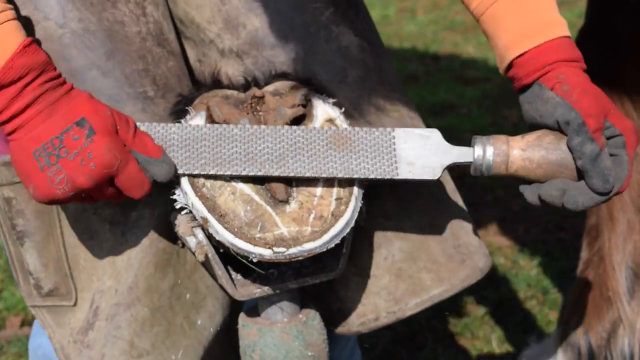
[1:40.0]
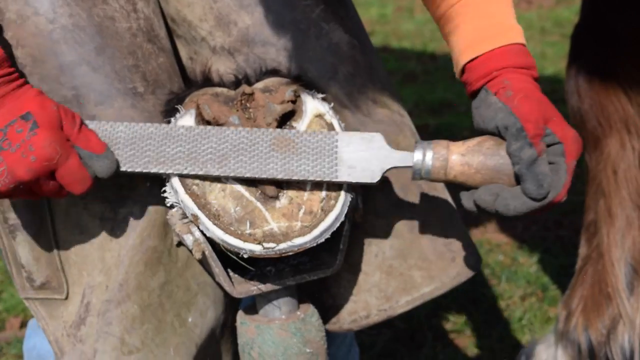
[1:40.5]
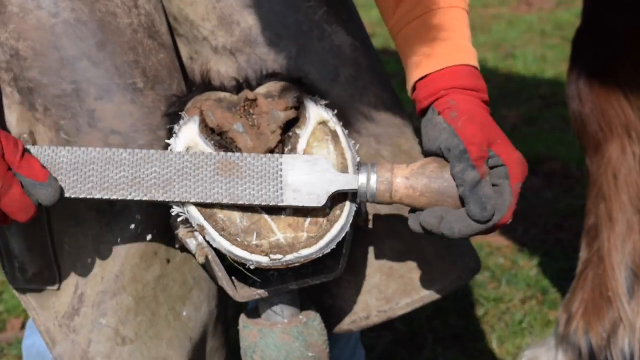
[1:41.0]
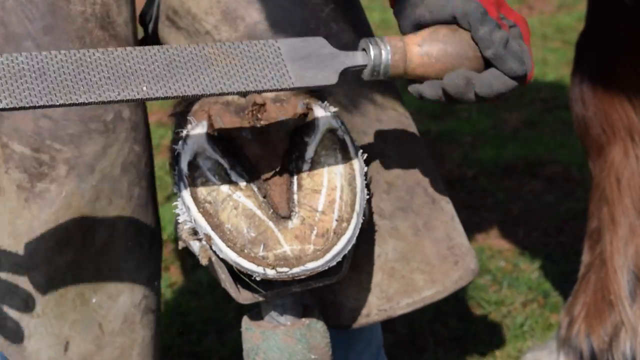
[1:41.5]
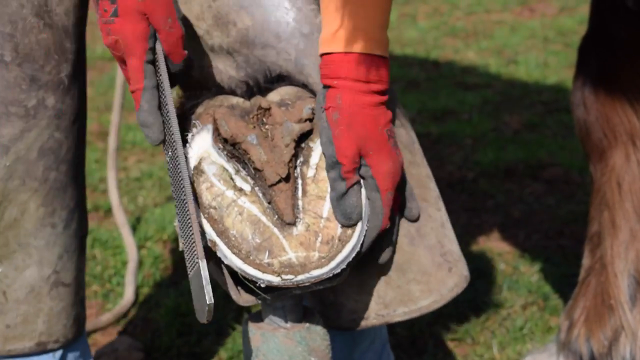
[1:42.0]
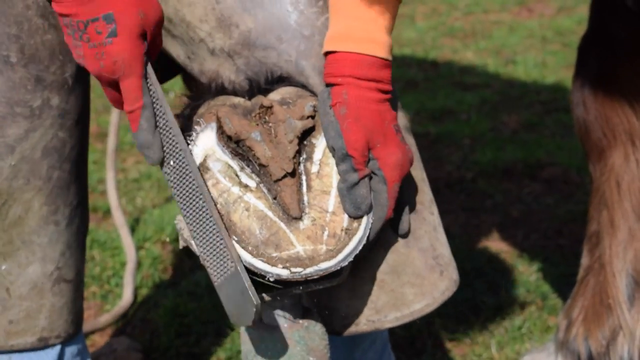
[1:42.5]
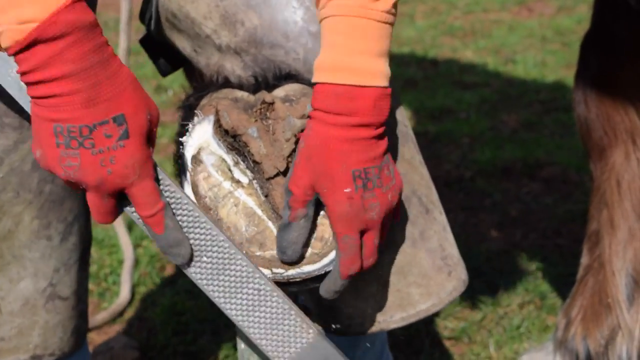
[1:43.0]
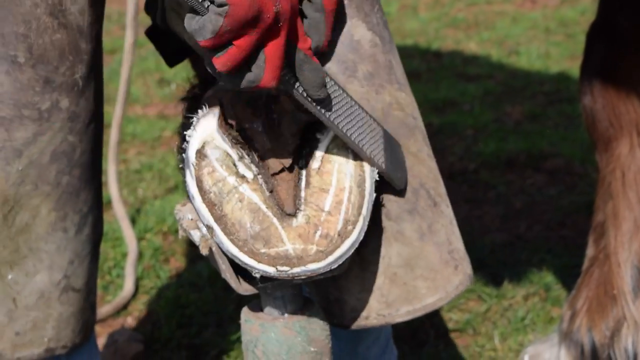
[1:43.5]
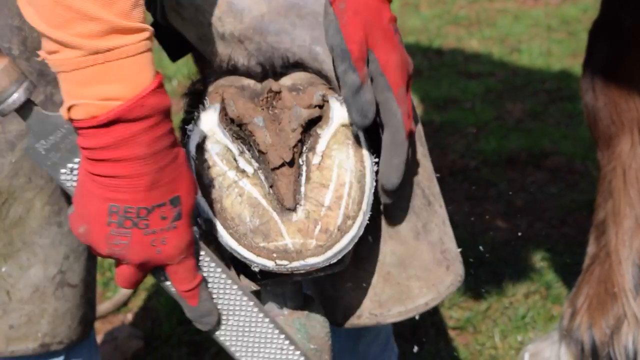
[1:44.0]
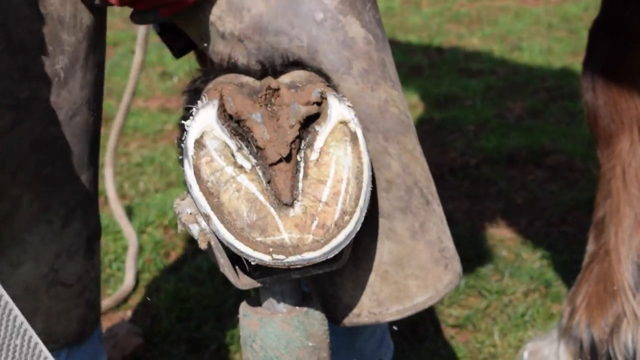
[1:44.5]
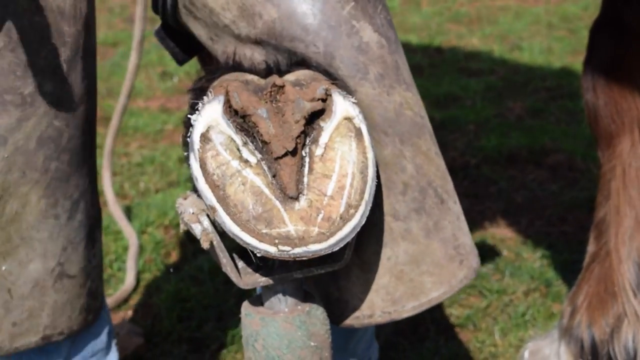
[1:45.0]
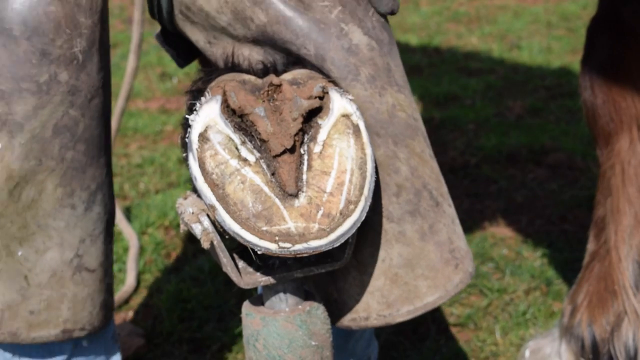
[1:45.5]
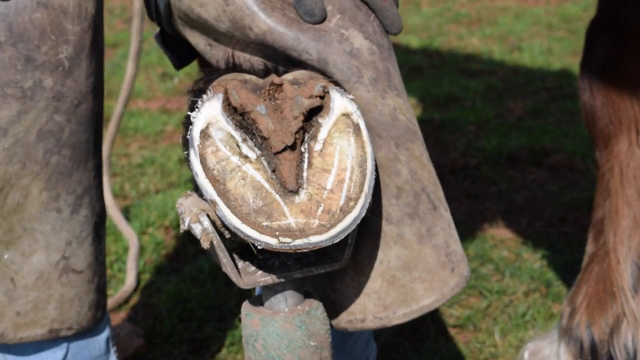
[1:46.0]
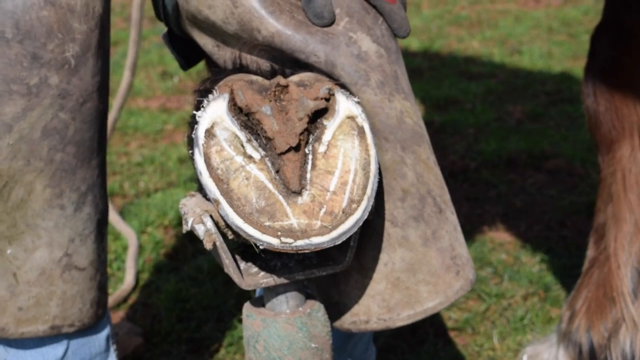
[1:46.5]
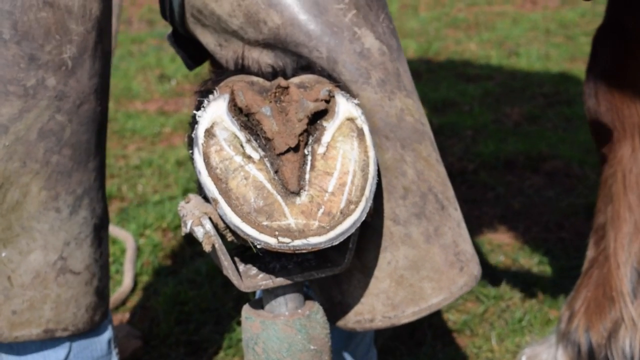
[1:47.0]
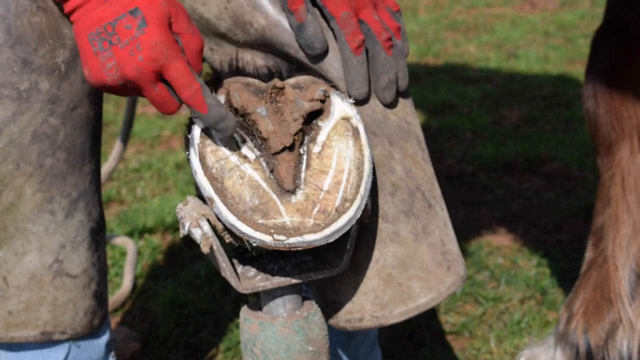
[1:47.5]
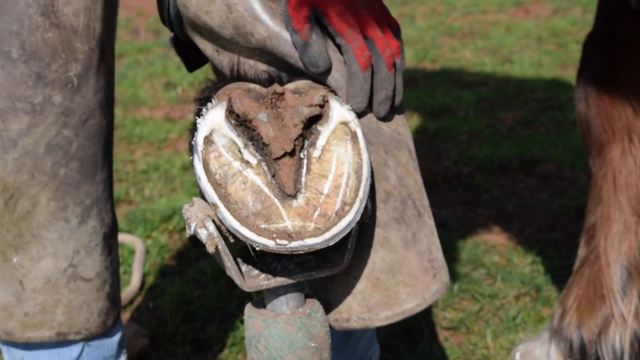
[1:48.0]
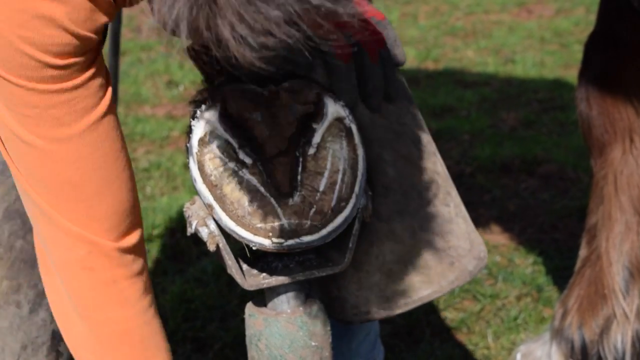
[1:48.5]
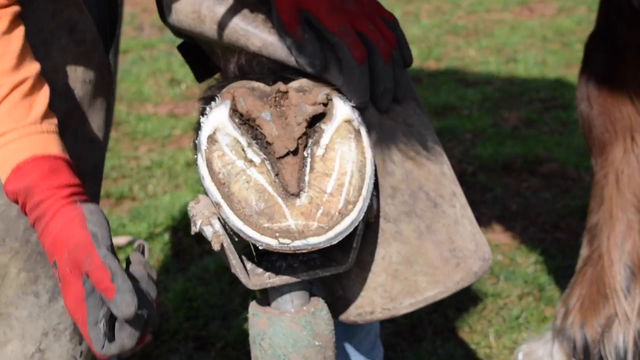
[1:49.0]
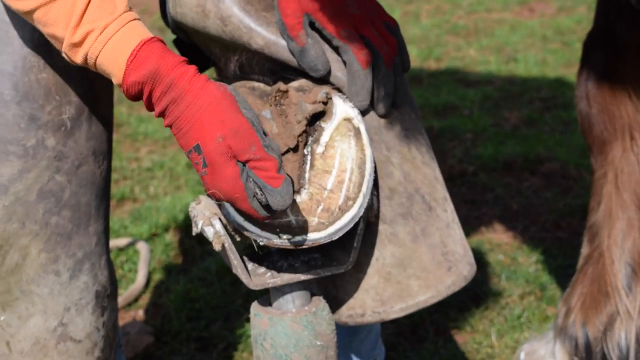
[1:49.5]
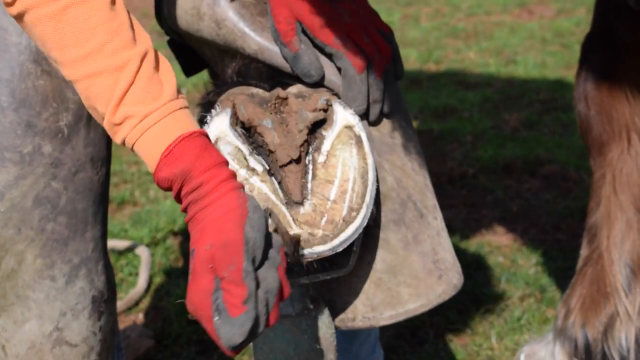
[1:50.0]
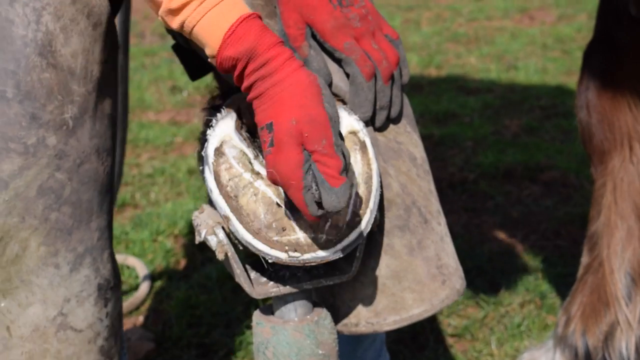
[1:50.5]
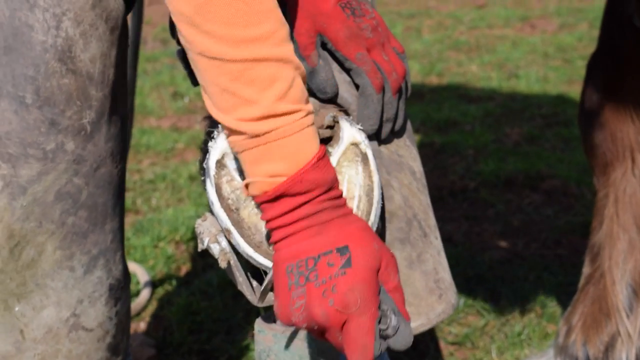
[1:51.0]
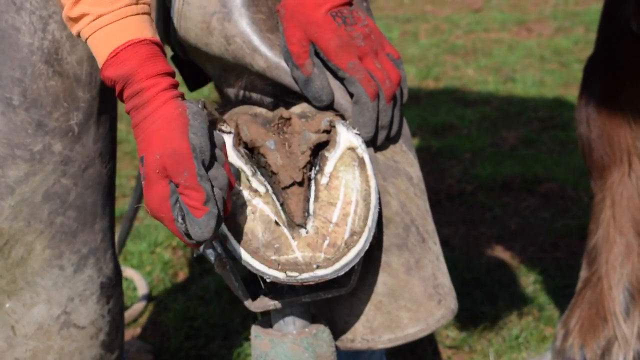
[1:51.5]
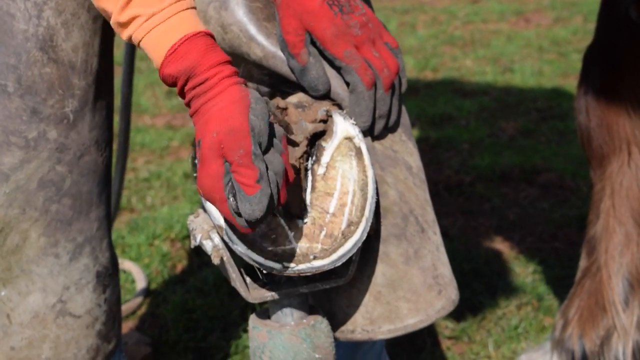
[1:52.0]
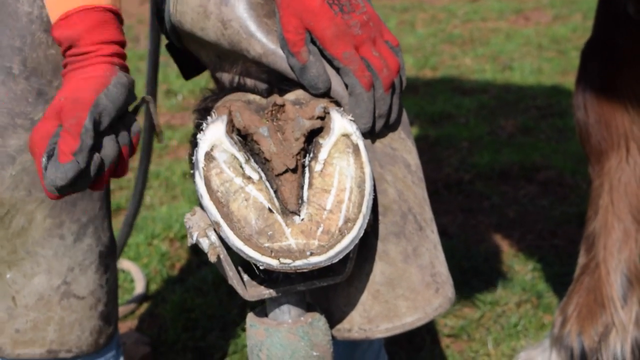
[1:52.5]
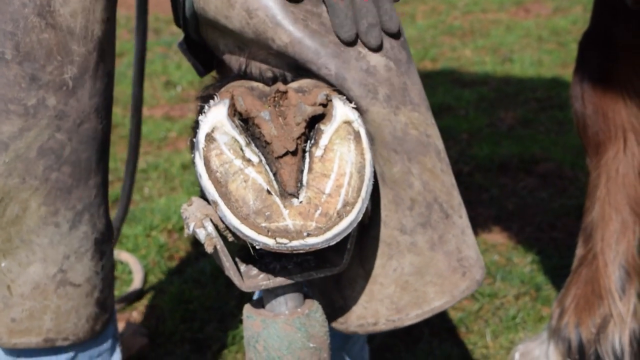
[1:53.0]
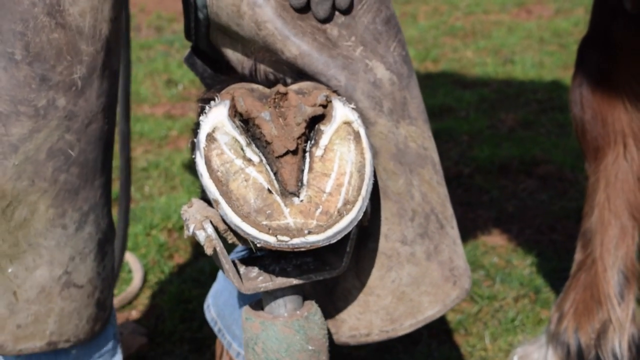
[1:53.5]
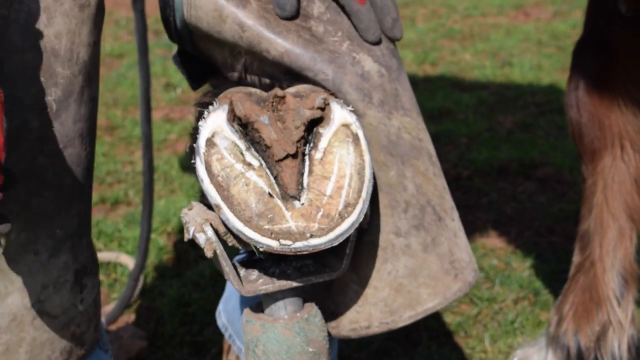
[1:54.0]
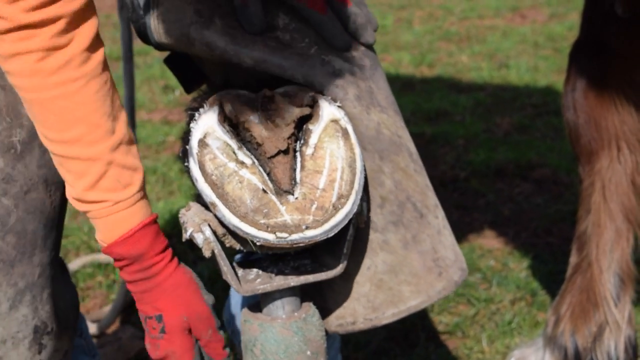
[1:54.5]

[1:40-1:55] Using the same large file tool, she files the top a little and continues filing around the edges. She points out a spot that she apparently thinks she missed. She grabs the other tool she used earlier, which cannot really be identified because her whole hand covers it, and quickly goes around the triangle area of the hoof, shaving a few little things off. She keeps the hoof in place with her leg, but toward the end she appears to slowly ease the foot back, maybe to get it out of the middle holder. The horse still stands still in the background as she explains what she is doing. Her hair blows lightly in the breeze, and the sun is shining brightly, casting shadows.